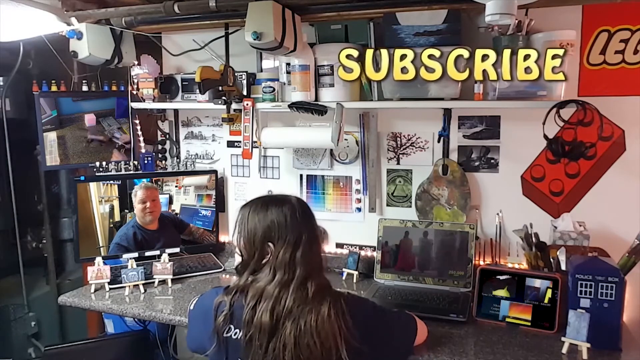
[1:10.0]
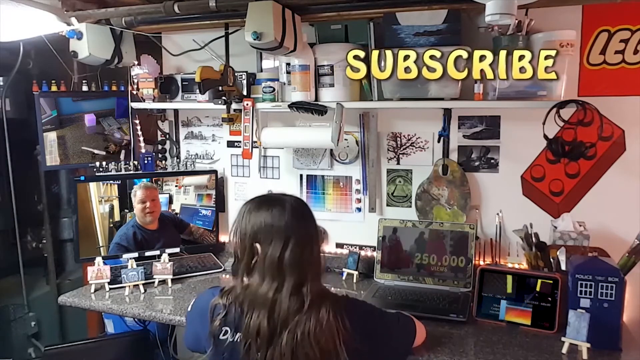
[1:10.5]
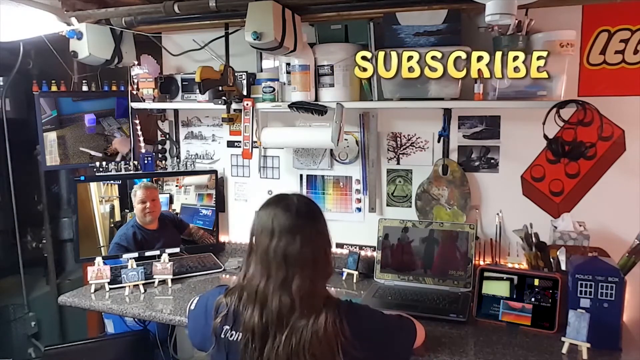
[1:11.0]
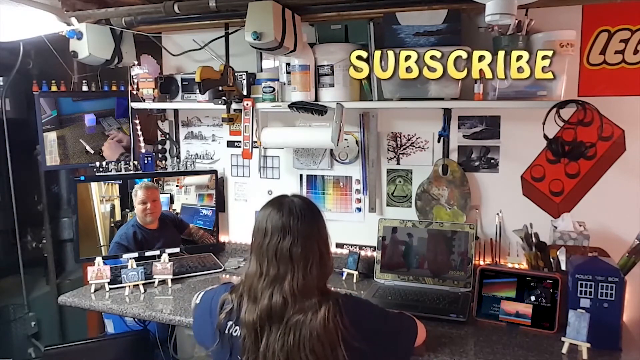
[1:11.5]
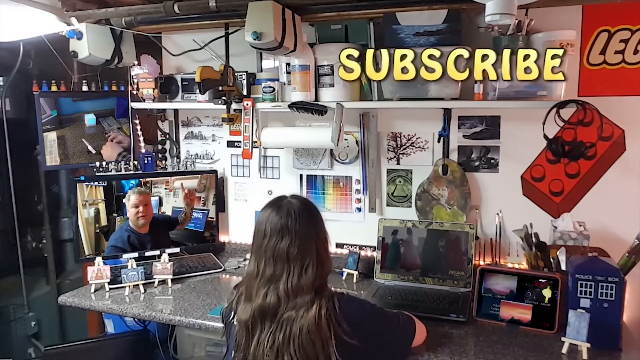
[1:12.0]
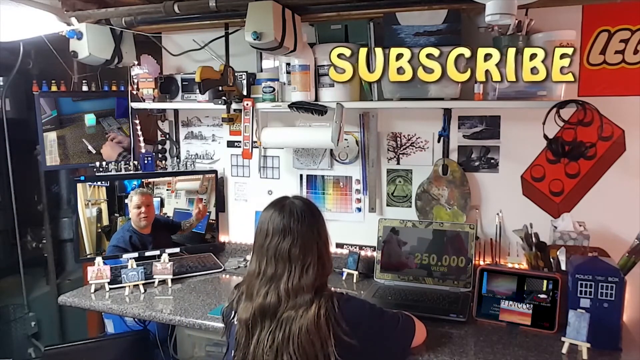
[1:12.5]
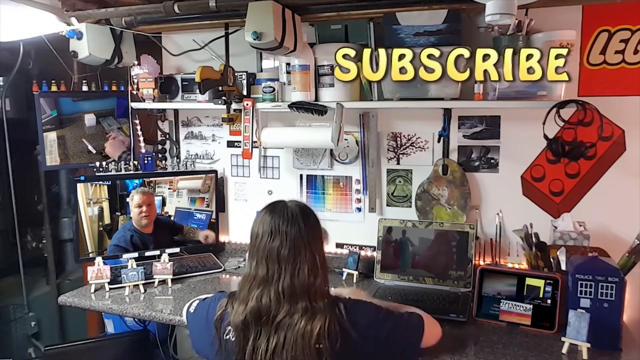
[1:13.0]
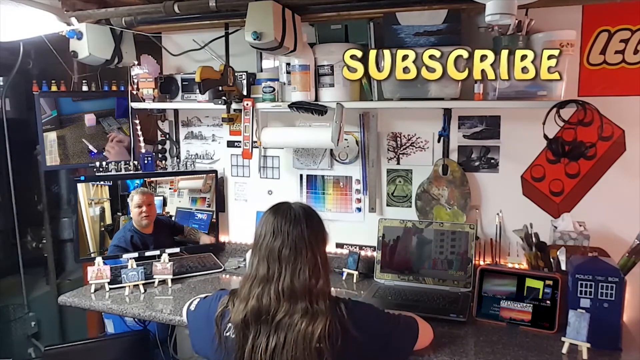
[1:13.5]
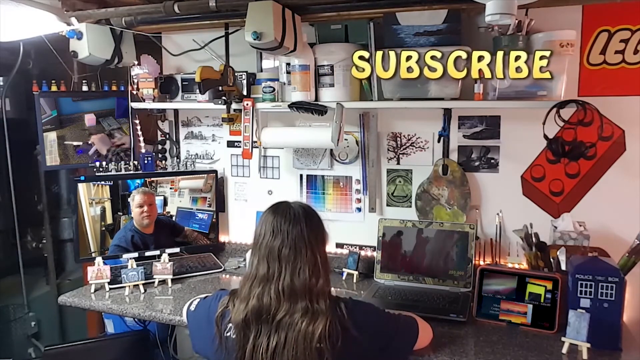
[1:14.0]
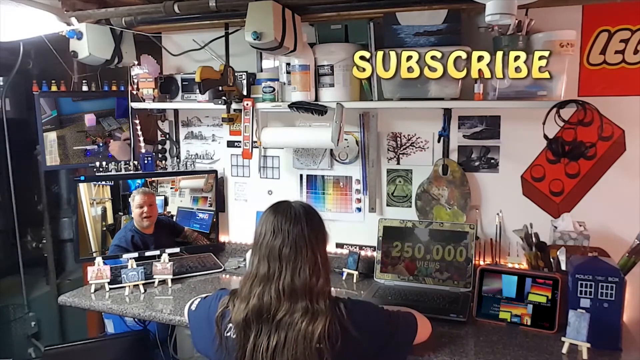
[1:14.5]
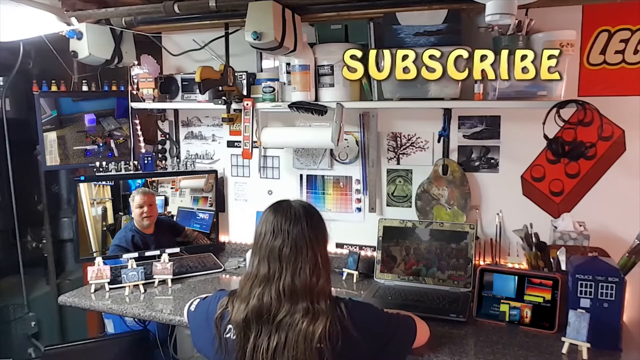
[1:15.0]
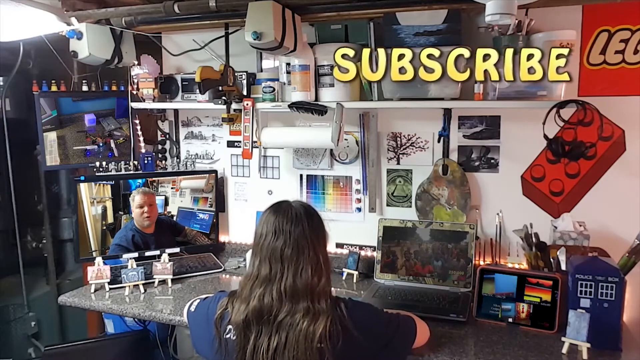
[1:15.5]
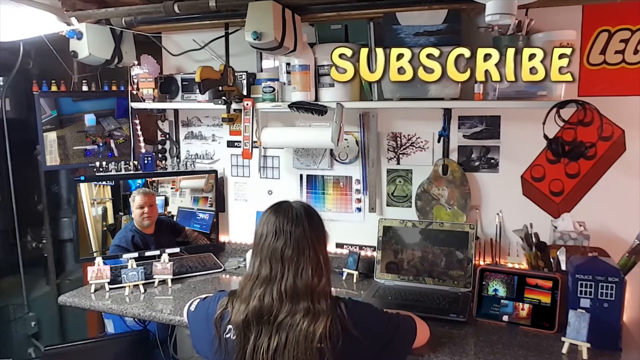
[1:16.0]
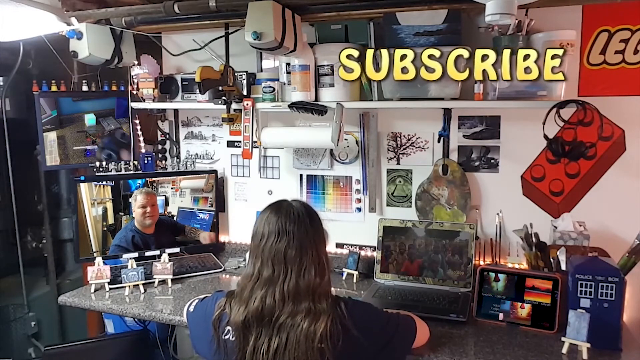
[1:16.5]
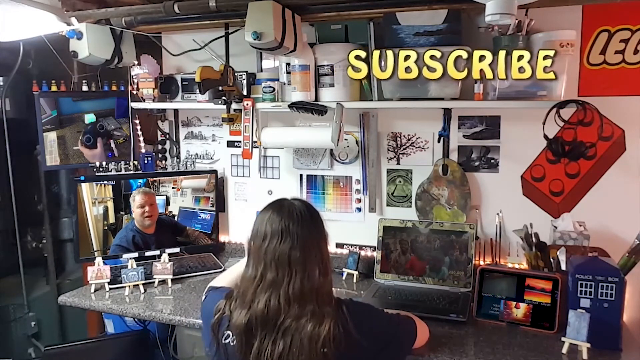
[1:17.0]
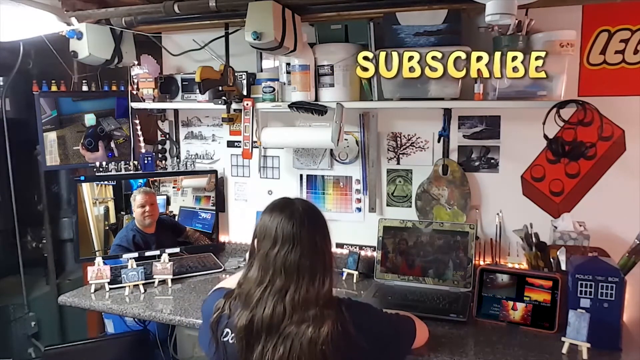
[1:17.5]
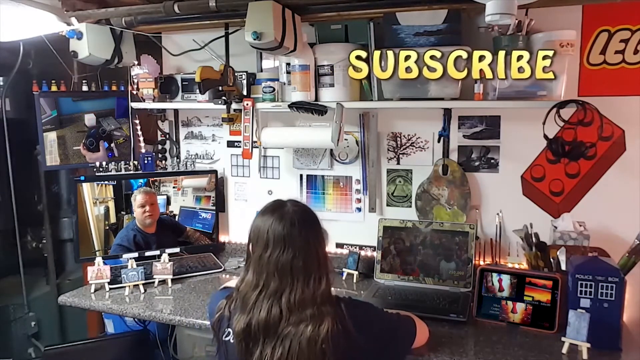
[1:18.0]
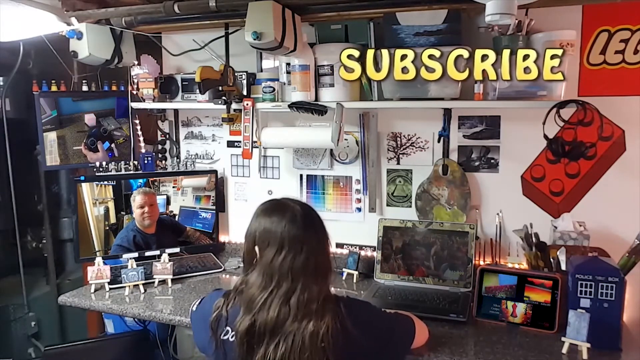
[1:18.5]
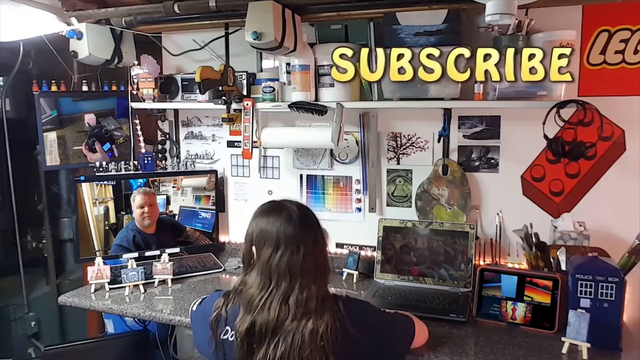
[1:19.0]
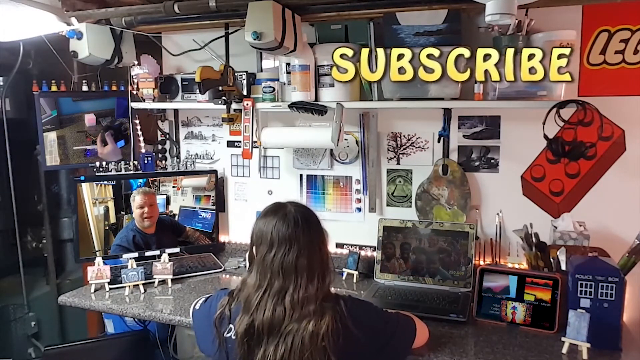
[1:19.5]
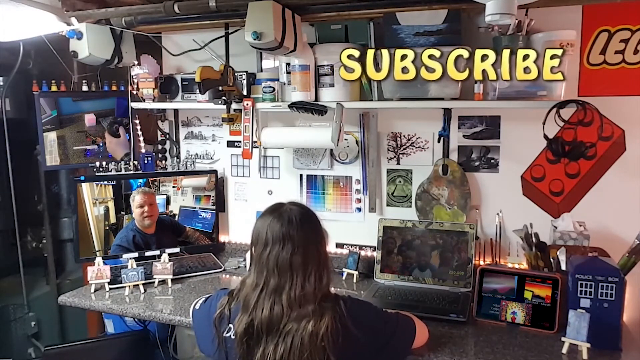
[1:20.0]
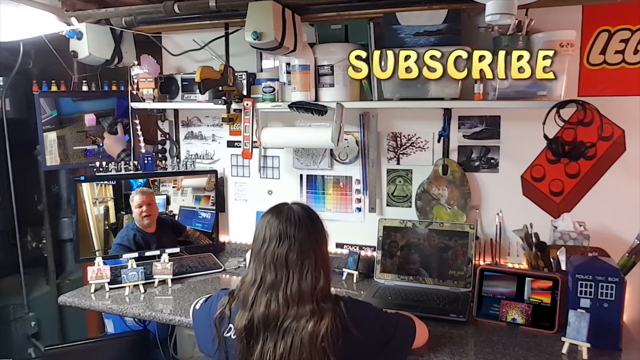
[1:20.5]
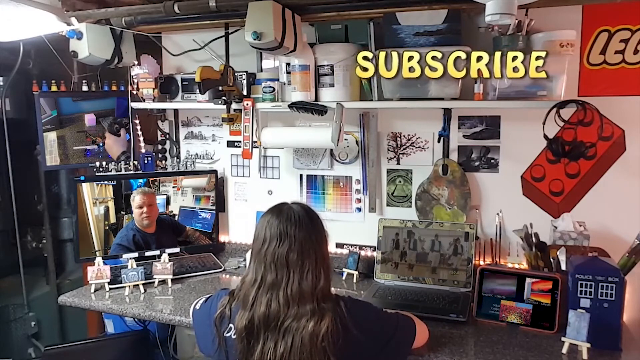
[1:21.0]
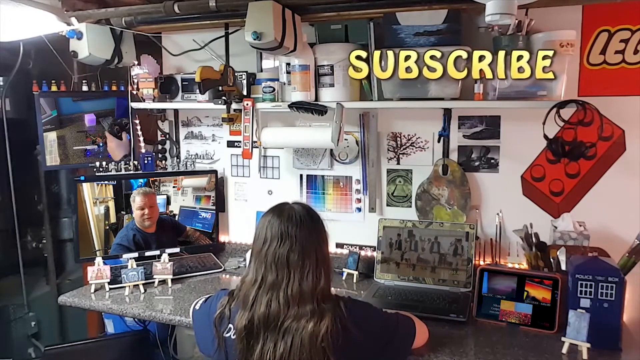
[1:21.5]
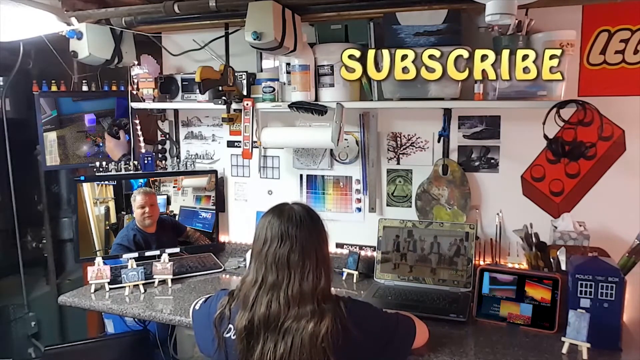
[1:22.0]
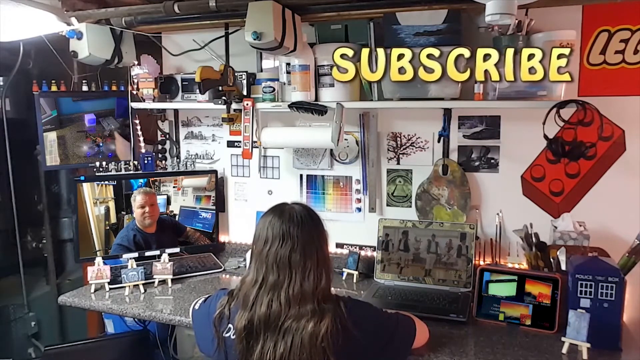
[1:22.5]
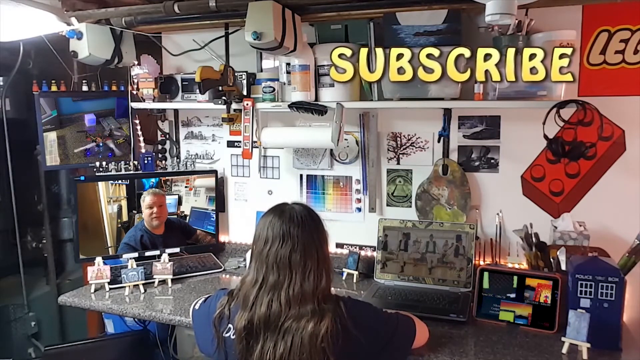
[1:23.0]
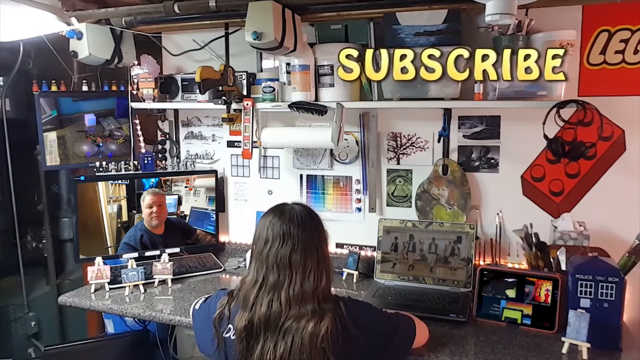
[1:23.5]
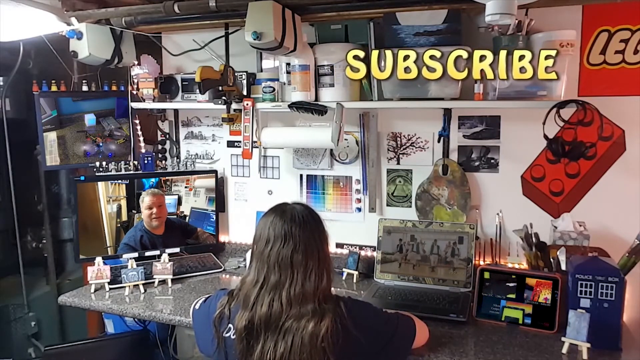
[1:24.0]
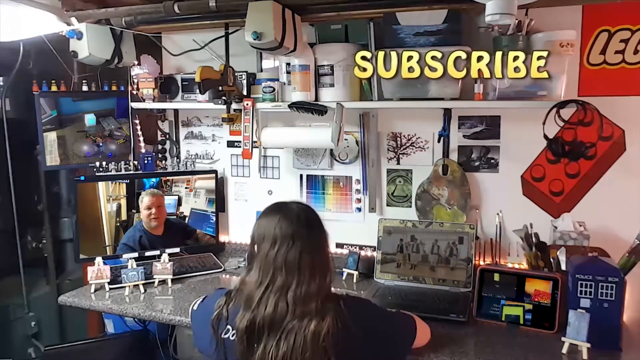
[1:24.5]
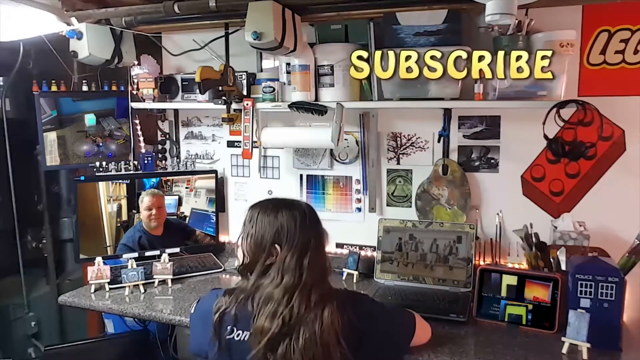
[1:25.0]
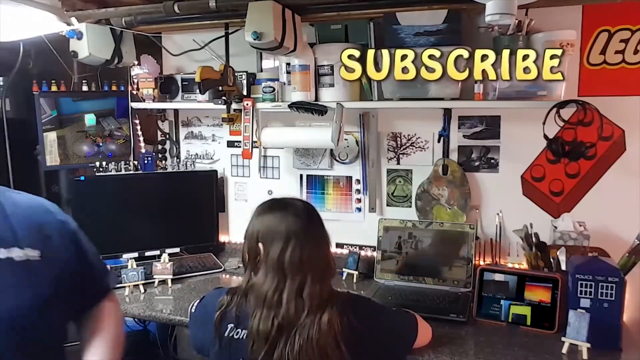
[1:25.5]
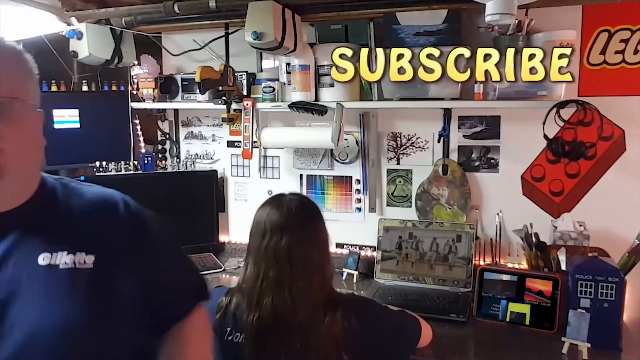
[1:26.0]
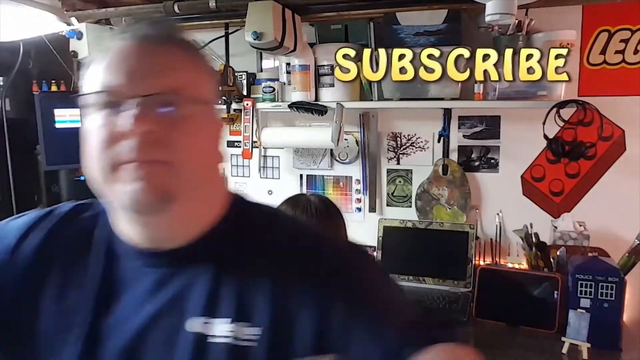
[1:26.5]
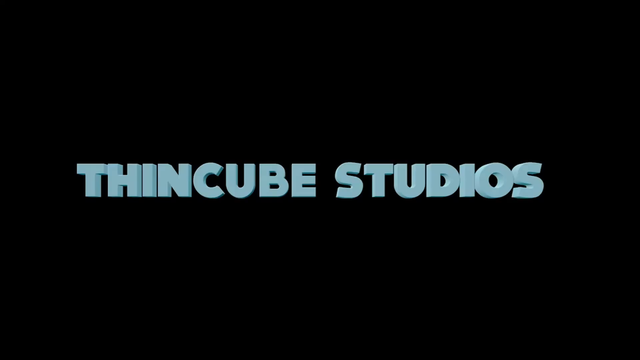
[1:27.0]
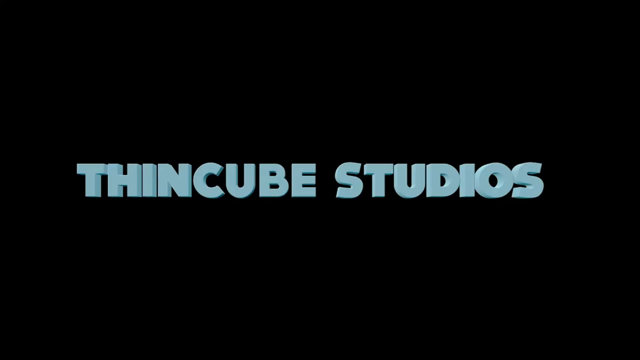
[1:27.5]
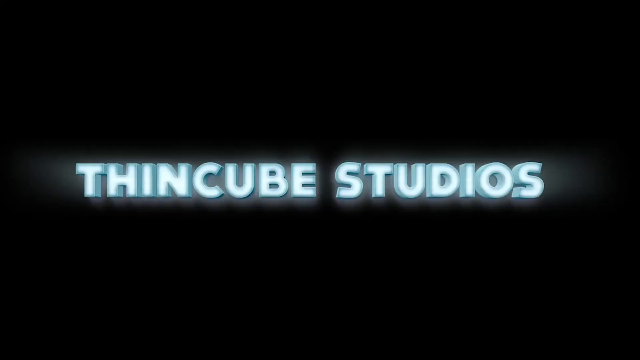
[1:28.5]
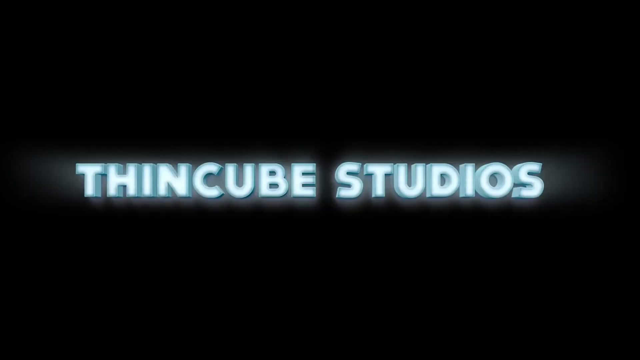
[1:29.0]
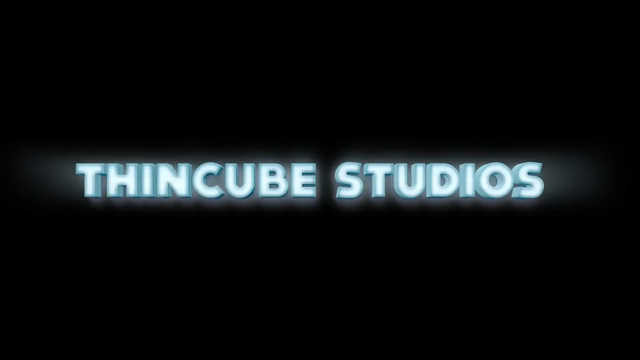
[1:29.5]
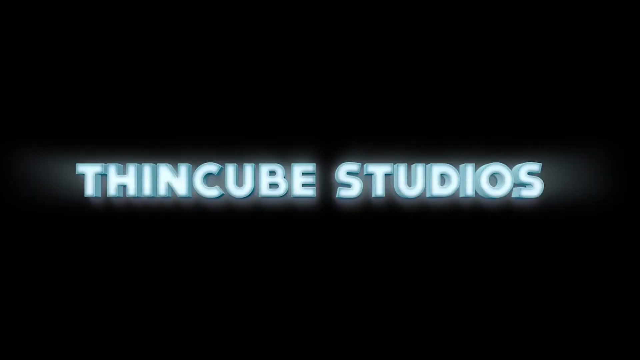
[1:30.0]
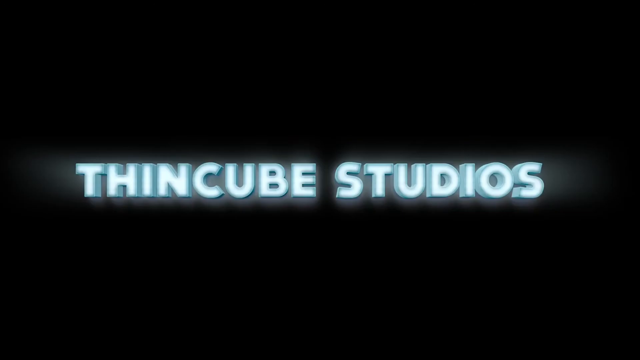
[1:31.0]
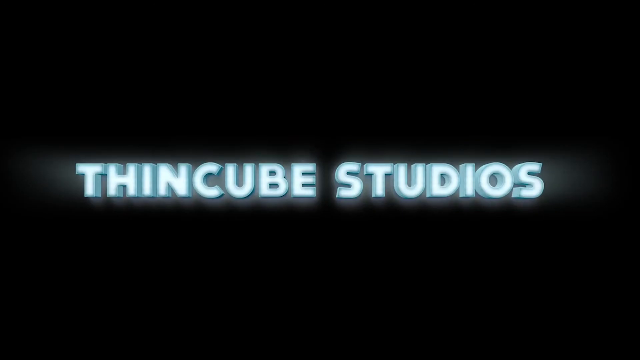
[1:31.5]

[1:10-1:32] A lady sits in an office-like environment watching multiple screens. One screen shows a video of someone fixing a drone, another shows a man who seems to be talking, possibly to her, another plays a video of people dancing, and a last small screen seems to be a gaming screen. The word "subscribe" appears, suggesting a YouTube channel teaching about drones or quads. At the end, the man seen on the screen walks up to the camera and stops the recording, and the video ends abruptly.